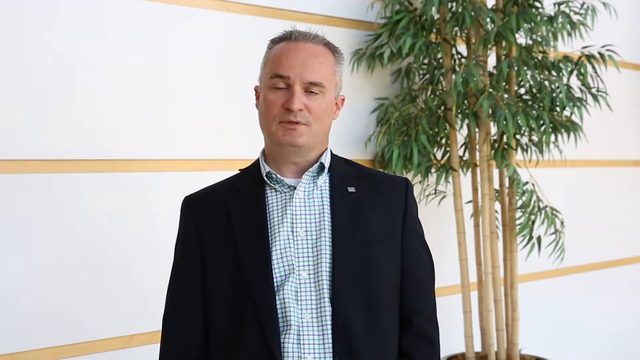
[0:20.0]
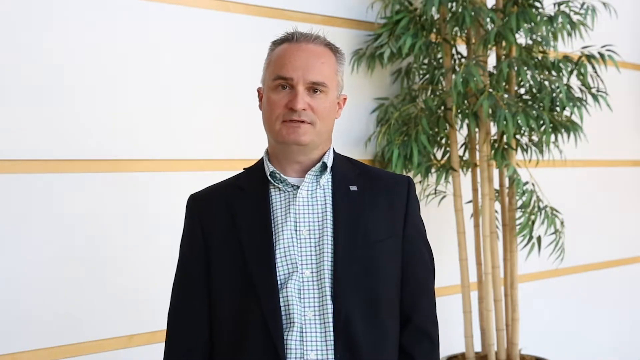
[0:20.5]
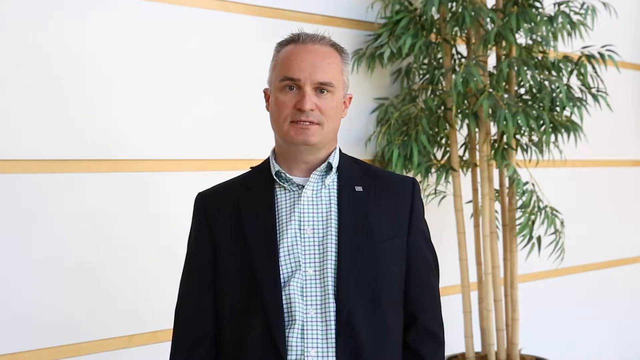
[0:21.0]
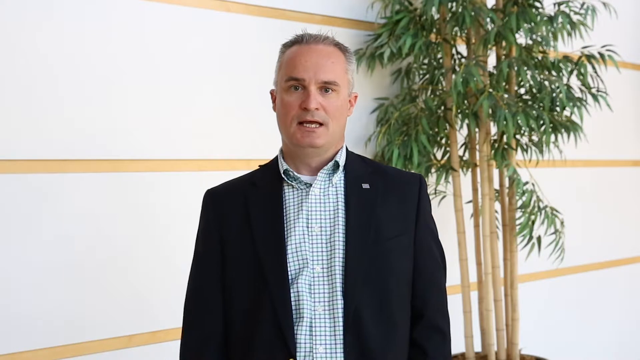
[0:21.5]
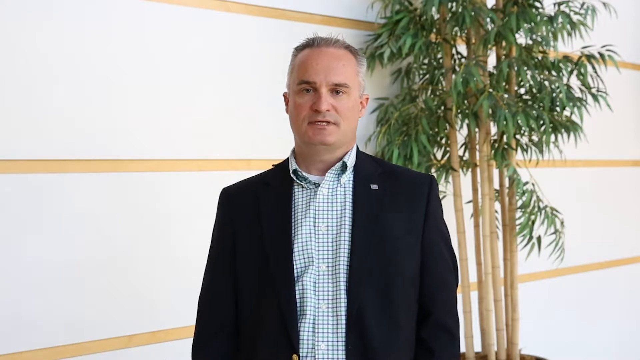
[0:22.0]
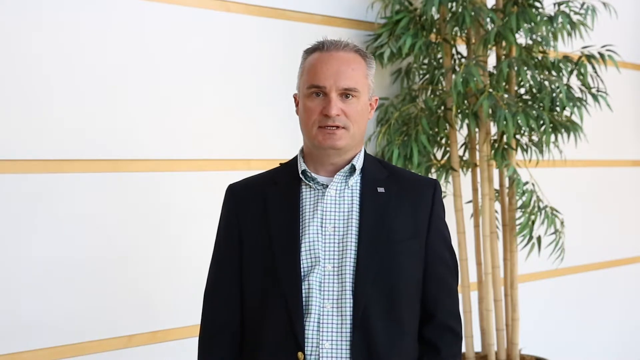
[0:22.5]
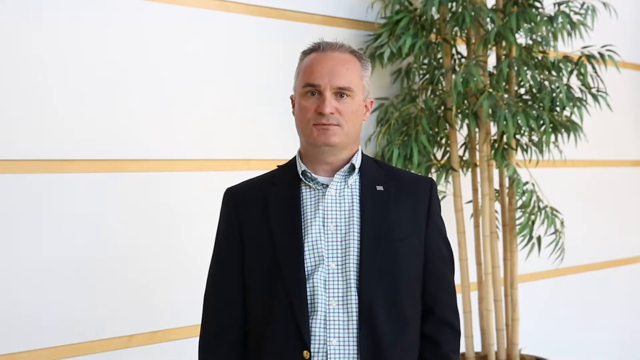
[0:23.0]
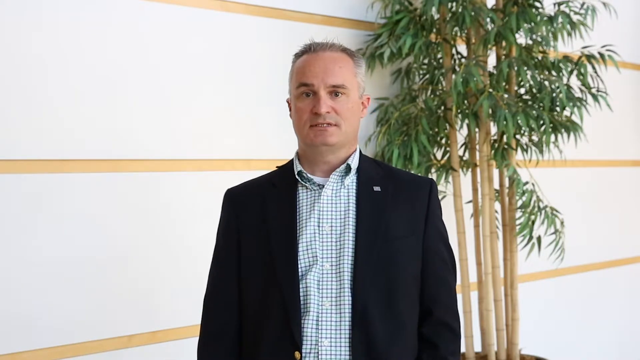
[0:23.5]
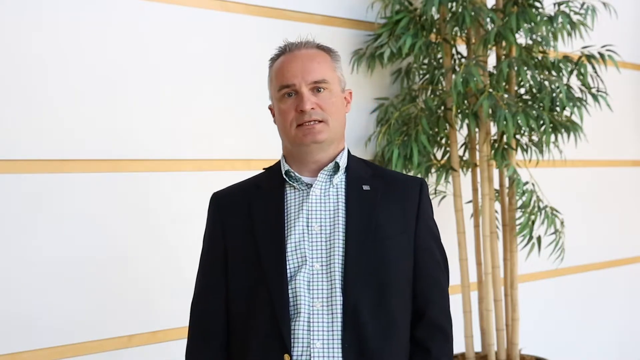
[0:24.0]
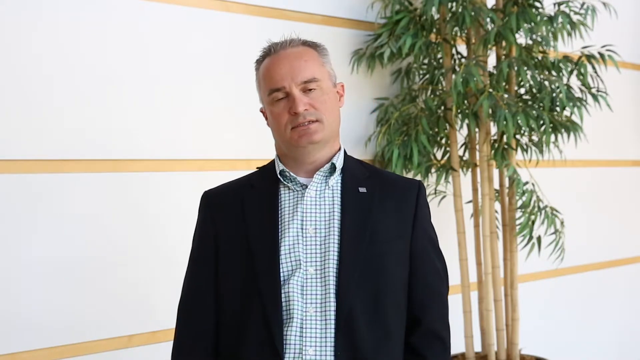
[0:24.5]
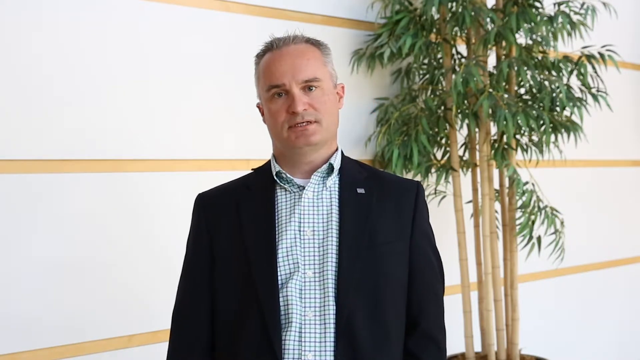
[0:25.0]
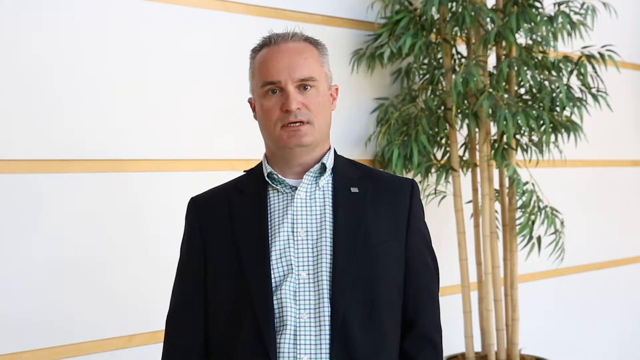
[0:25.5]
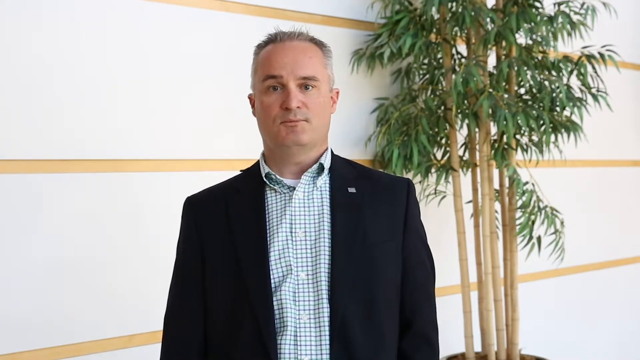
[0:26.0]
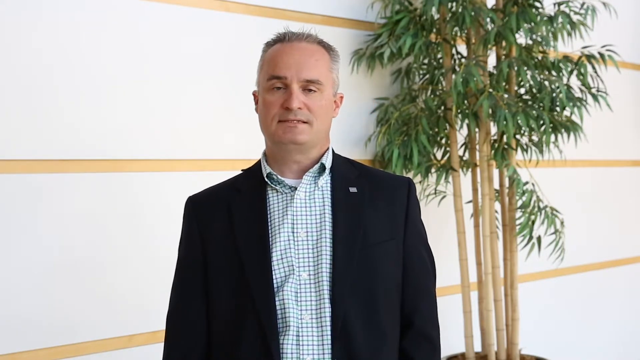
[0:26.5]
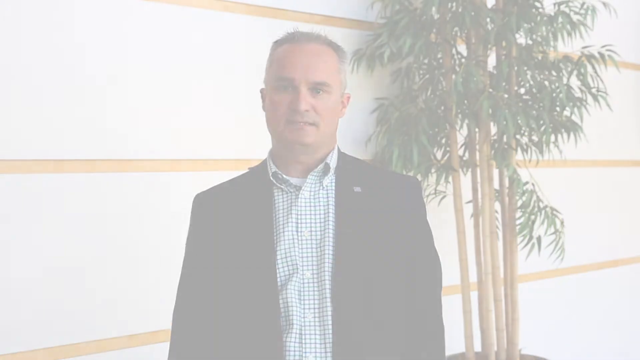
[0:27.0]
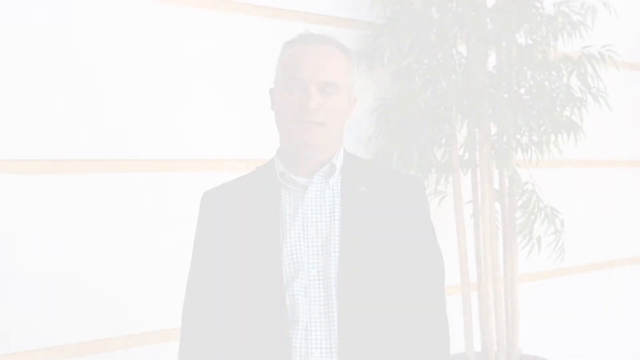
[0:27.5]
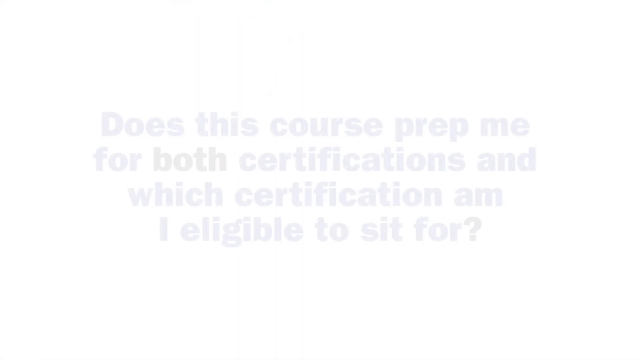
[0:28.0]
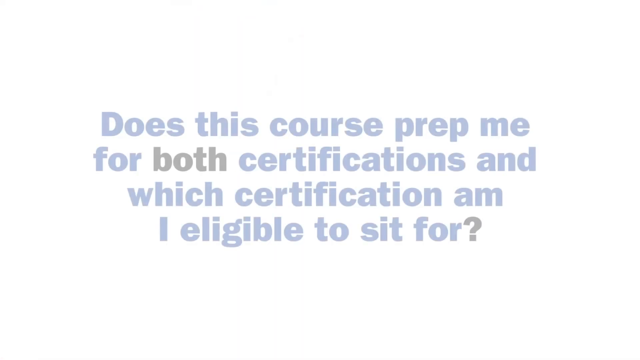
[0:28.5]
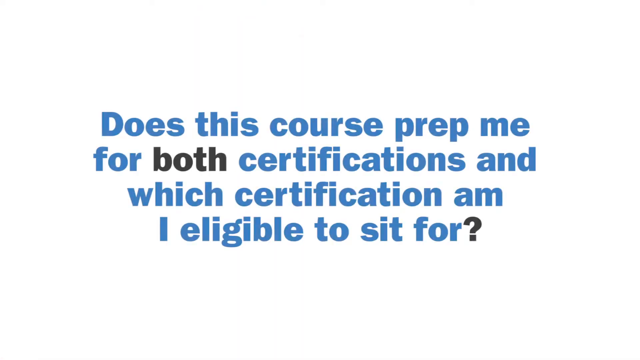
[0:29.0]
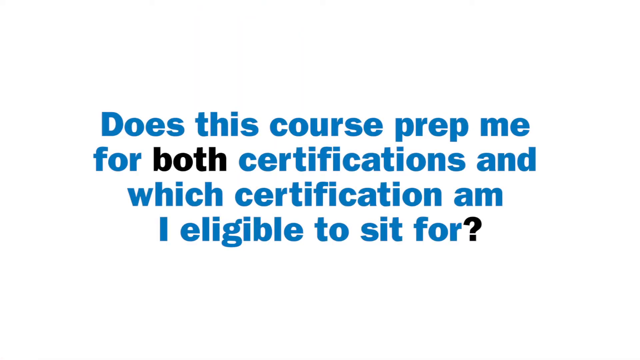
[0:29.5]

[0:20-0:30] Against a white and brown background with a tree, information appears in blue and black fonts on a white background. One word and a question mark are in black, while the rest of the text is in blue. Chris, the instructor, talks while moving his head and his hand. He does not lift the hand; it only moves in a low-key way, as if he is demonstrating something.